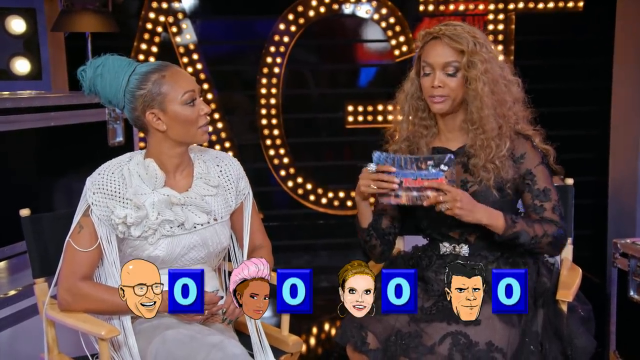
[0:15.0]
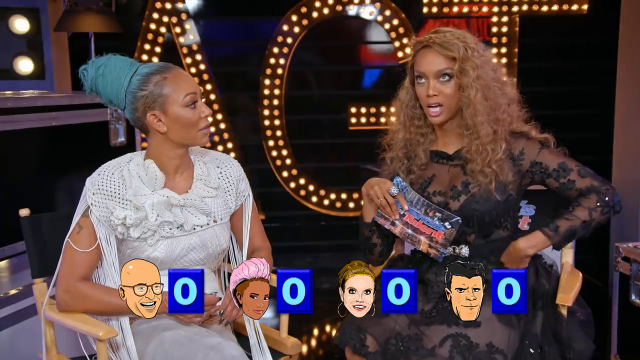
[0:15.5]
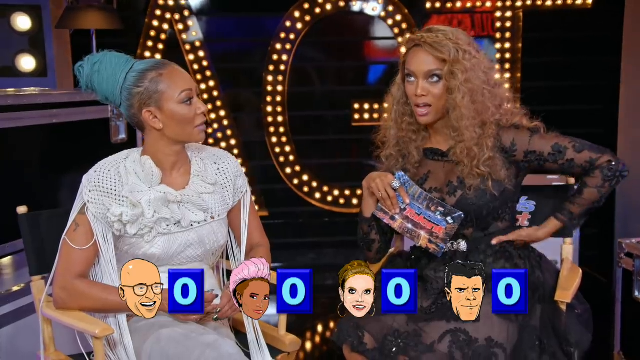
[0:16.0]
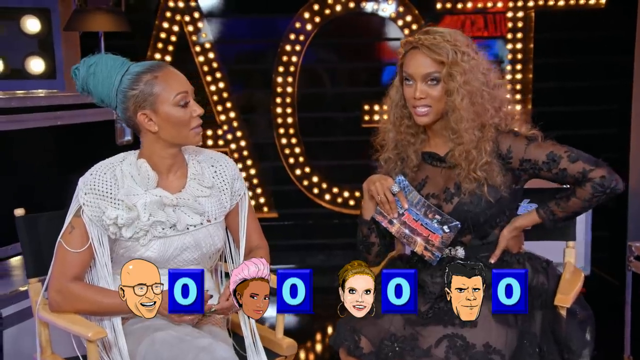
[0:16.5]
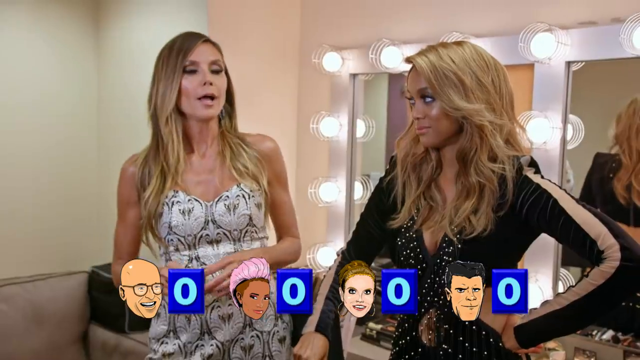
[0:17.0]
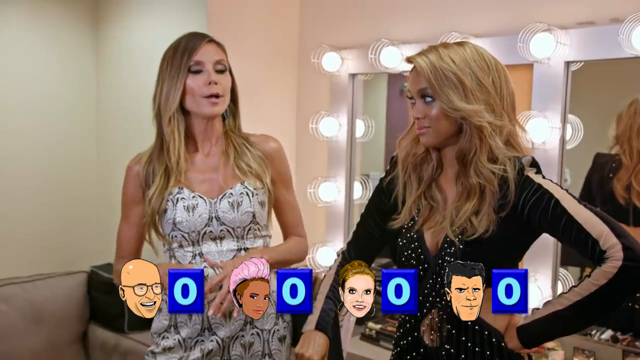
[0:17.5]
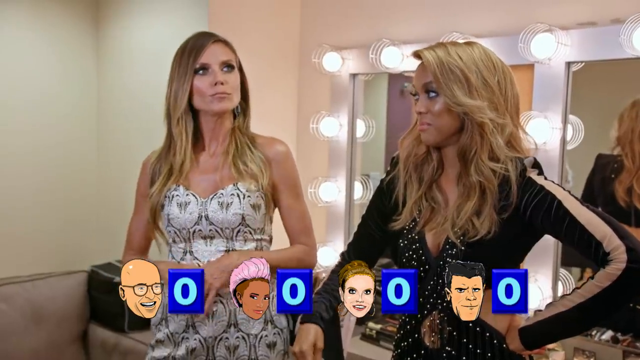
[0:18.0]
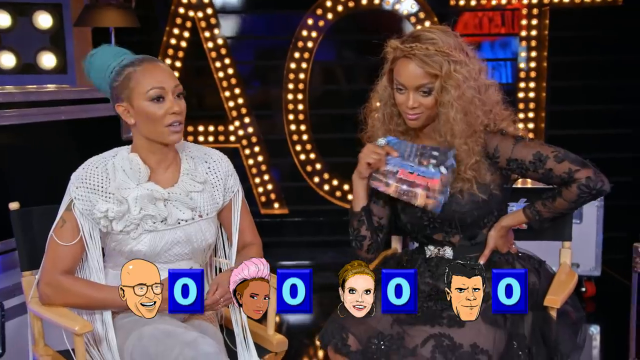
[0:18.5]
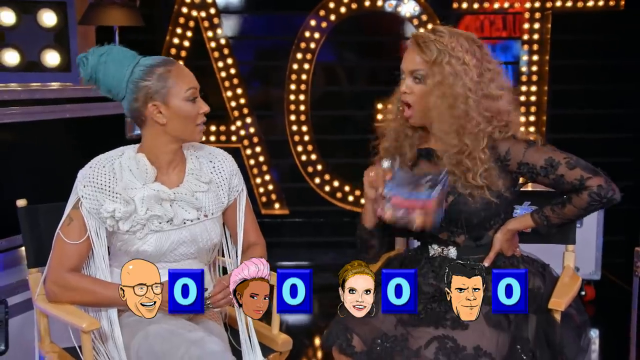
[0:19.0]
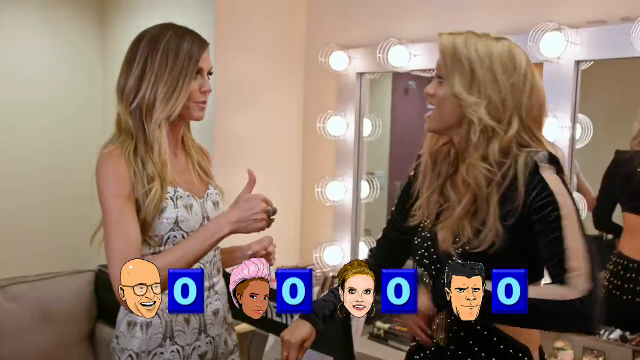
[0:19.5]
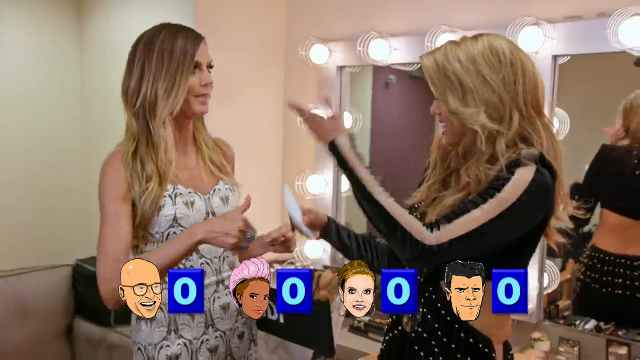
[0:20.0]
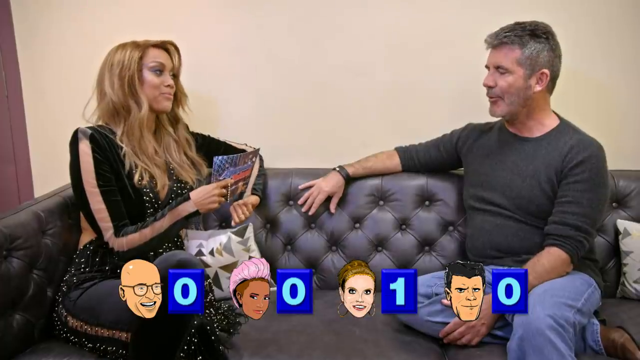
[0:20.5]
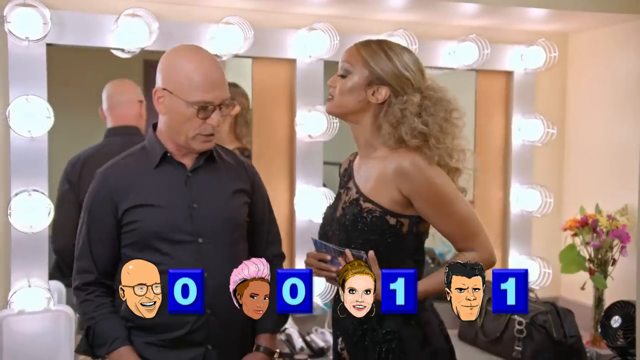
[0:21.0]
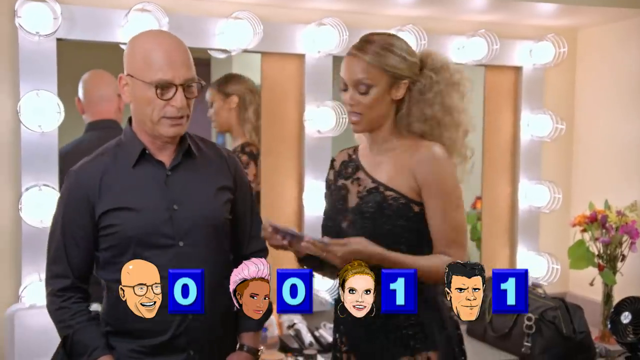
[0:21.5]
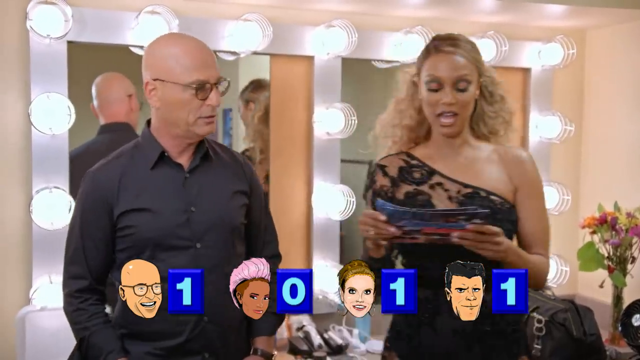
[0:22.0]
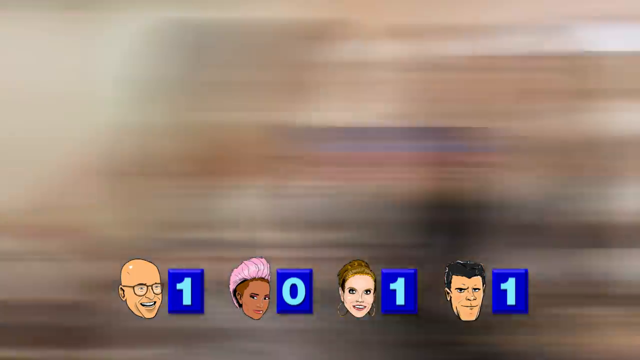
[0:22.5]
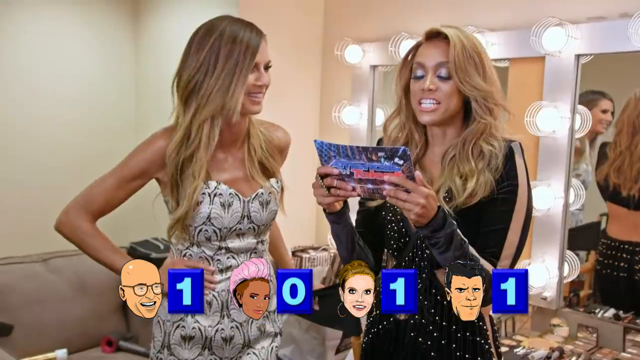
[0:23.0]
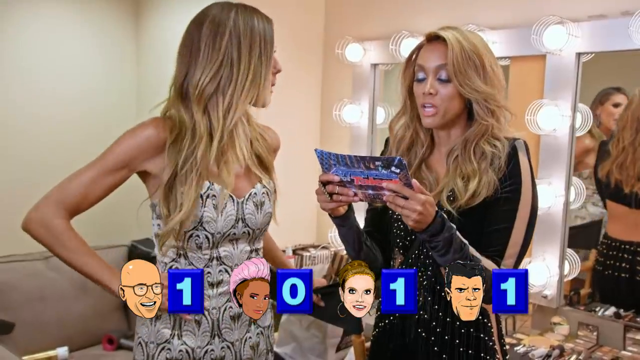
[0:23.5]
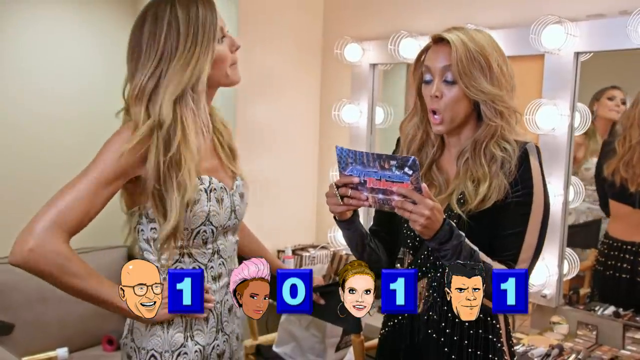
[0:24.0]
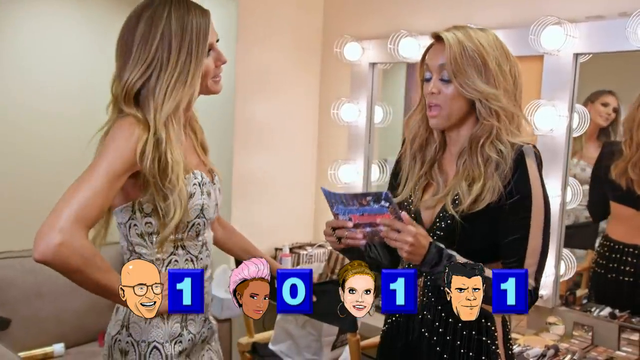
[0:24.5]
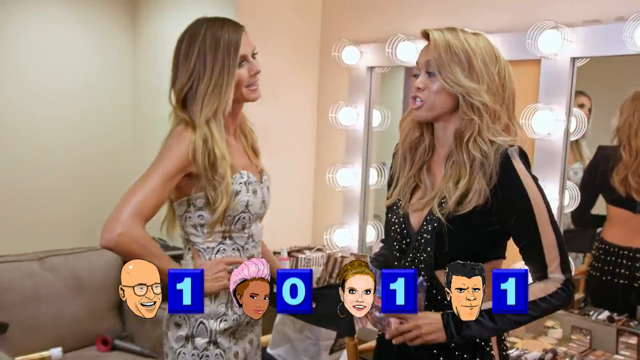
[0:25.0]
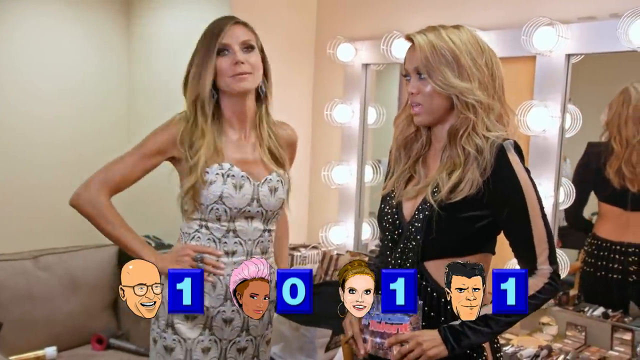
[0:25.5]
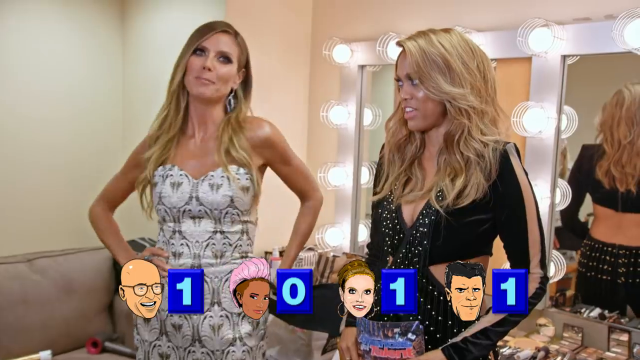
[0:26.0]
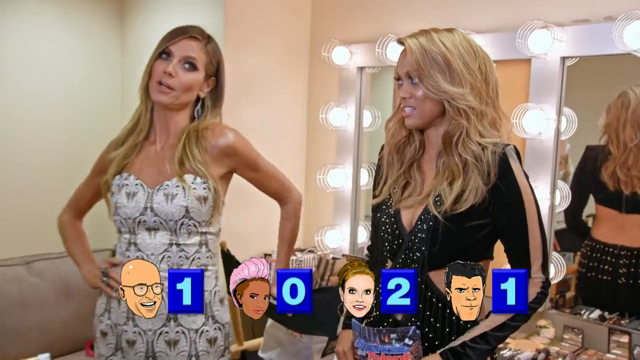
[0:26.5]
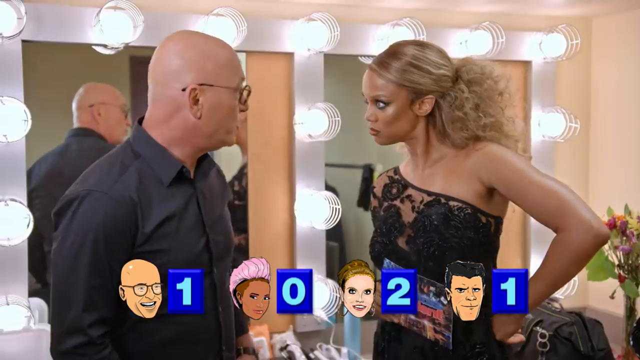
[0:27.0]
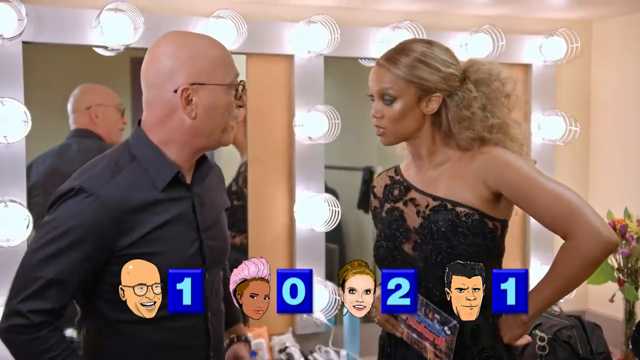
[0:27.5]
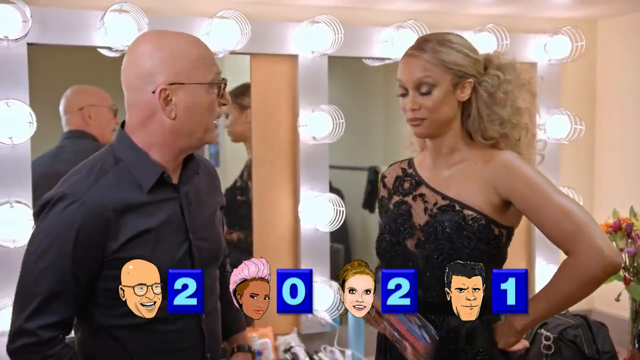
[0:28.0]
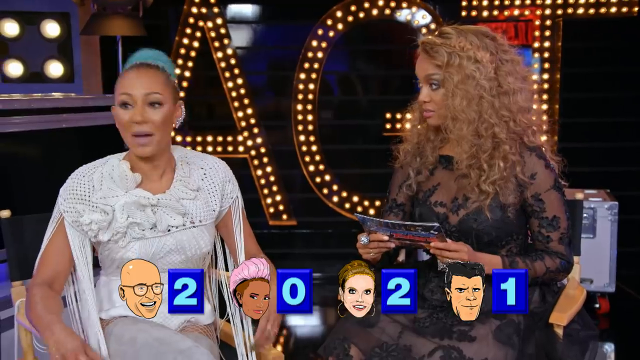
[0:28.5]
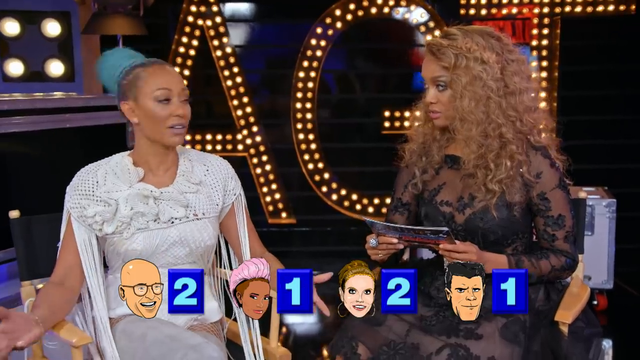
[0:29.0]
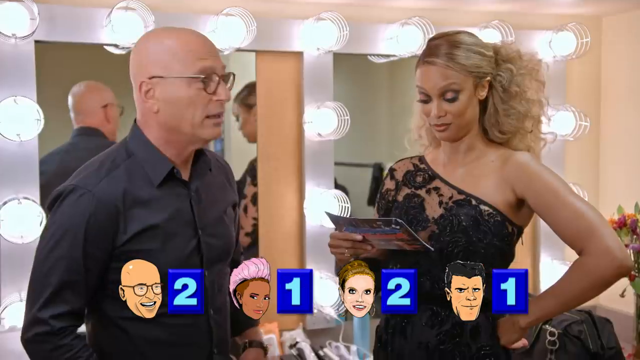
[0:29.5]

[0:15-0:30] Tyra Banks grills the judges on America's Got Talent, sitting with each of them and asking questions. She reads from a large note card, and the judges seem to get pretty serious when they answer; some of them might be getting upset. She is with Howie Mandel, Heidi Klum, Simon Cowell and a fourth judge whose name is not given. The video jumps from scene to scene as she keeps asking different questions, and the questions she asks can be seen. The judges are very defensive, seeming to put their hands up and nodding their heads. Tyra wears a different outfit with different judges and her hairstyle differs in nearly every segment, suggesting they were filmed at separate times. None of the judges seem to have a pleasant look on their faces as they answer.